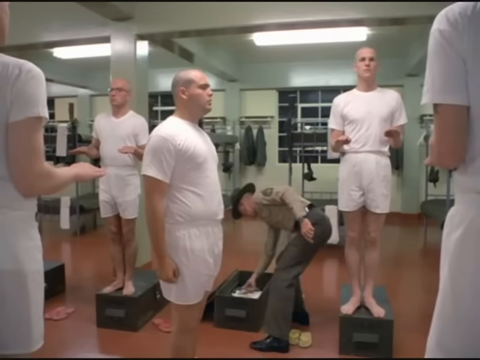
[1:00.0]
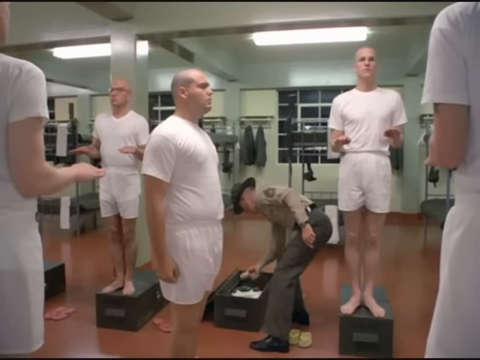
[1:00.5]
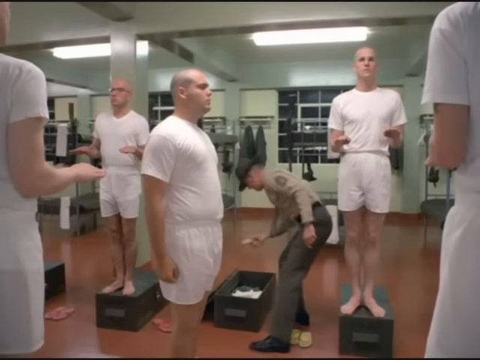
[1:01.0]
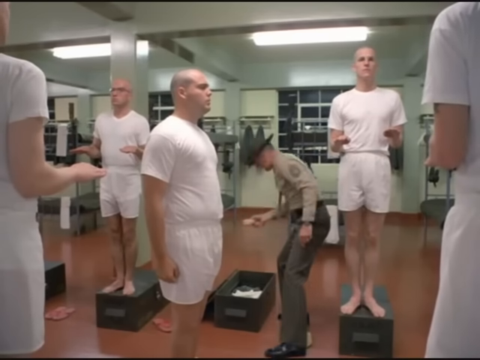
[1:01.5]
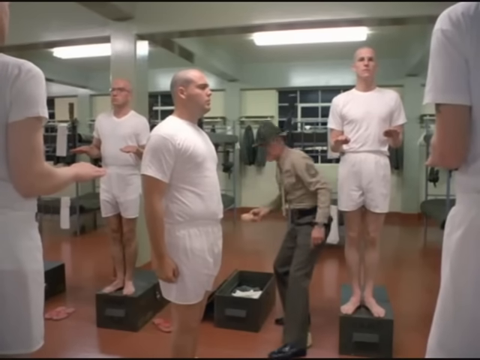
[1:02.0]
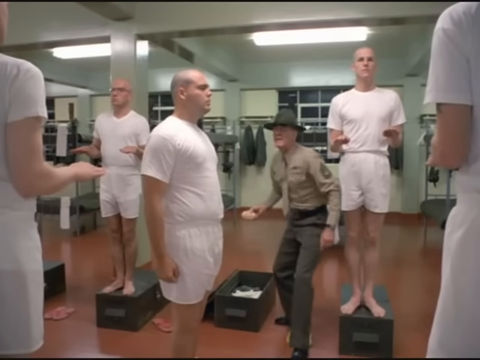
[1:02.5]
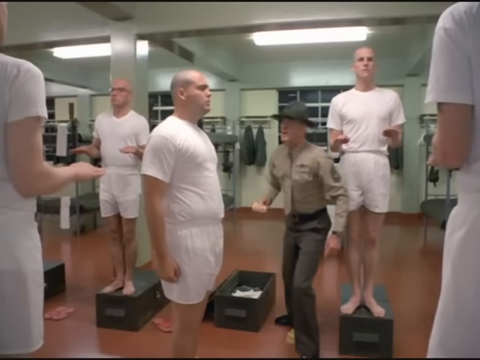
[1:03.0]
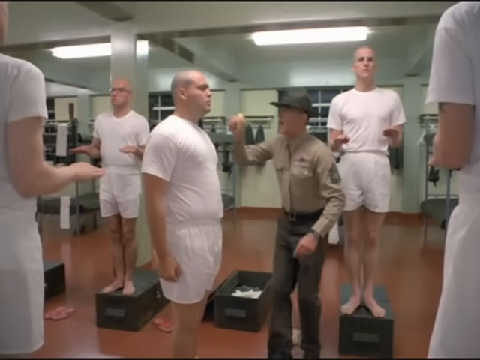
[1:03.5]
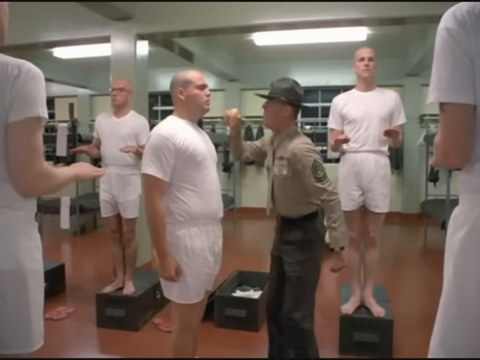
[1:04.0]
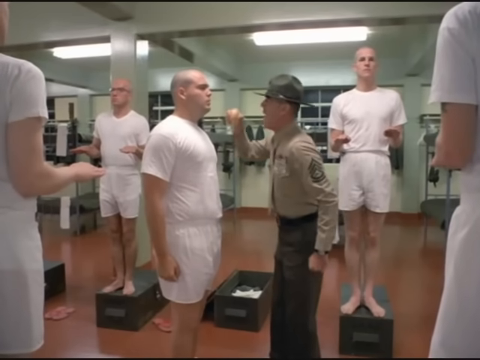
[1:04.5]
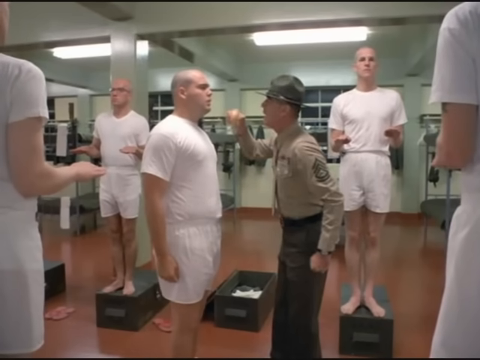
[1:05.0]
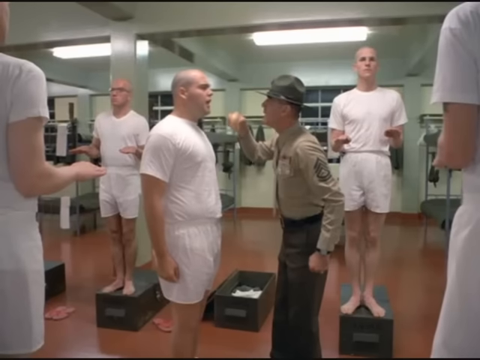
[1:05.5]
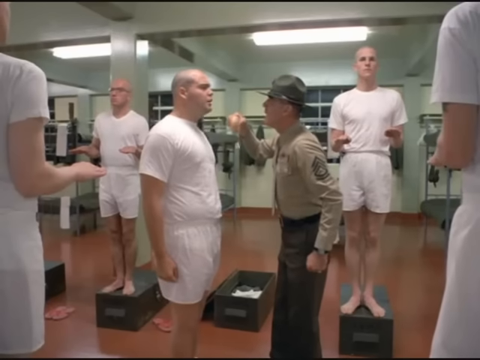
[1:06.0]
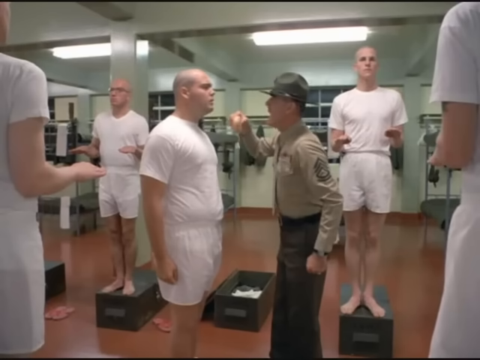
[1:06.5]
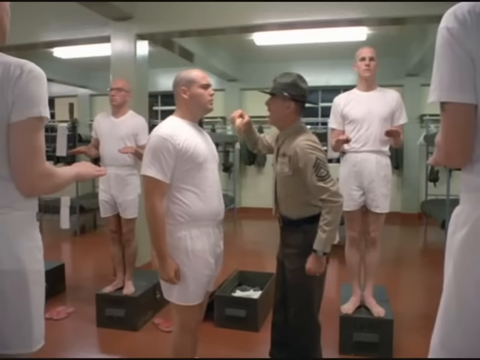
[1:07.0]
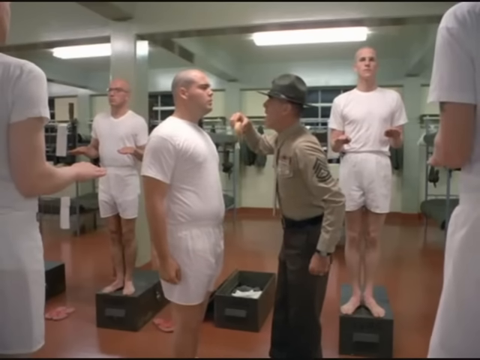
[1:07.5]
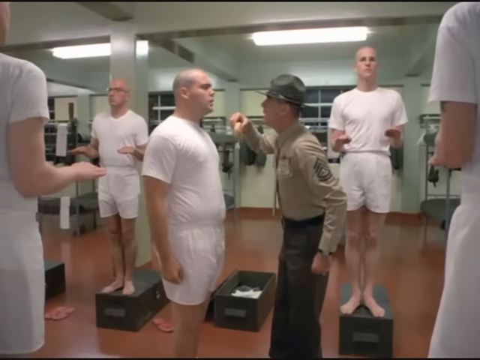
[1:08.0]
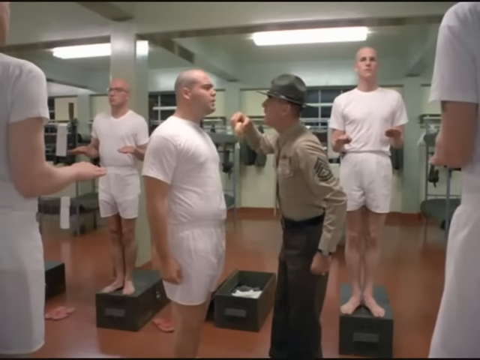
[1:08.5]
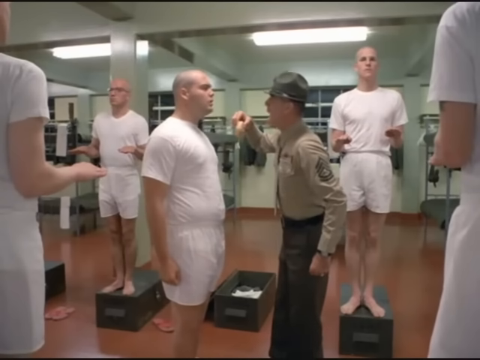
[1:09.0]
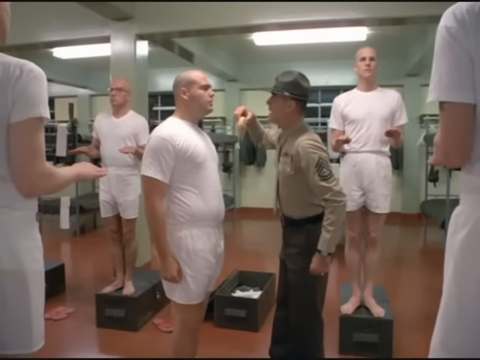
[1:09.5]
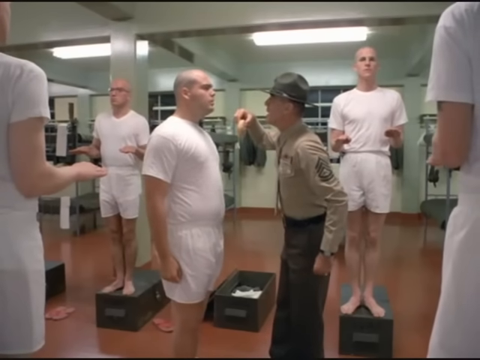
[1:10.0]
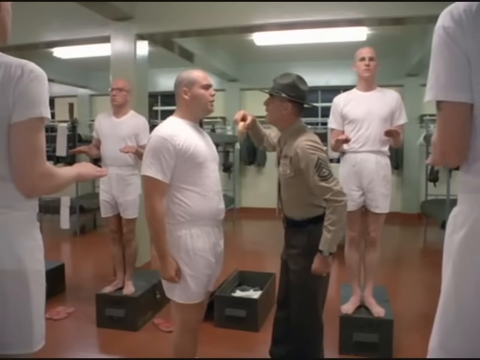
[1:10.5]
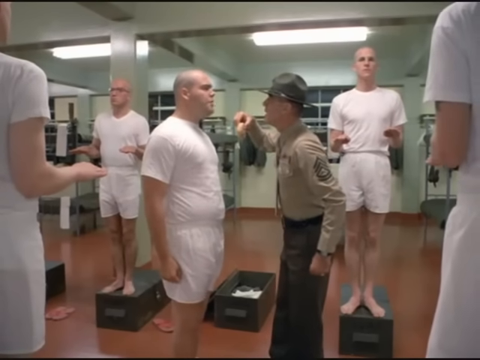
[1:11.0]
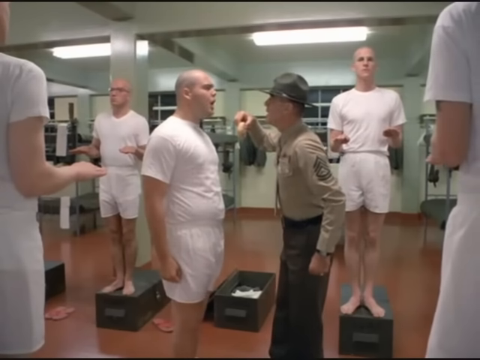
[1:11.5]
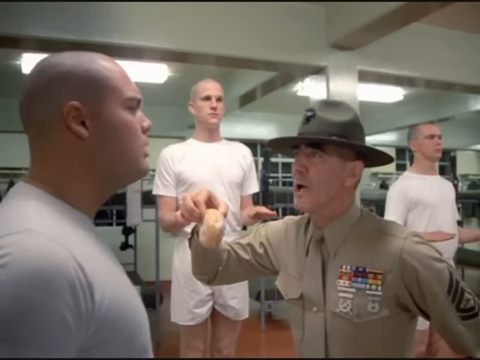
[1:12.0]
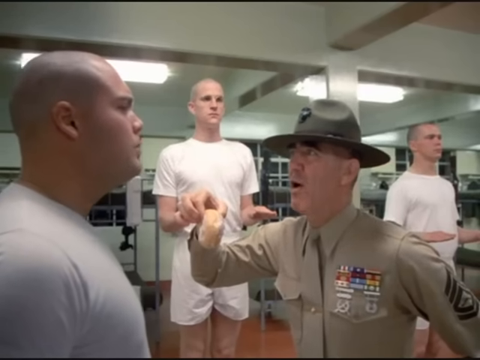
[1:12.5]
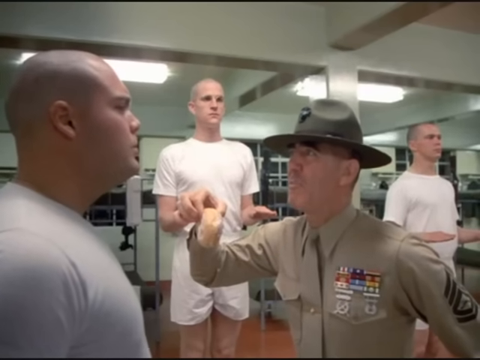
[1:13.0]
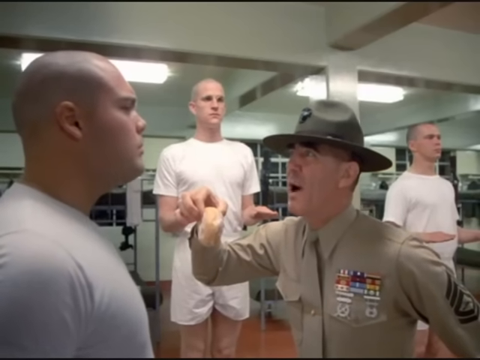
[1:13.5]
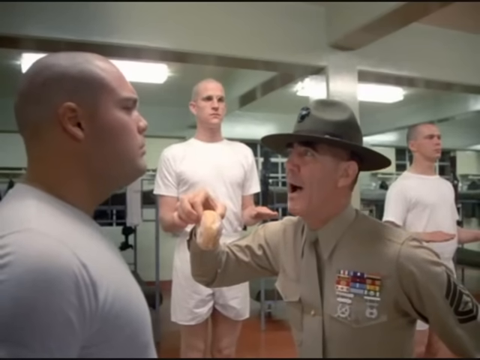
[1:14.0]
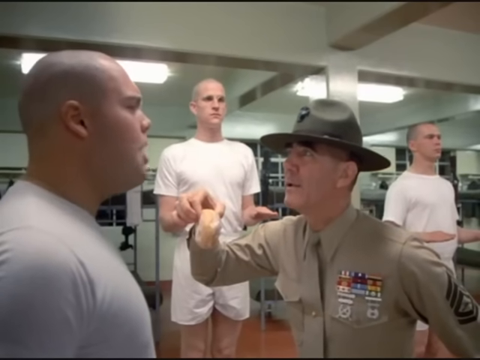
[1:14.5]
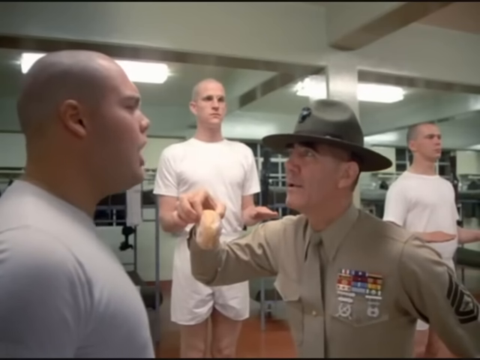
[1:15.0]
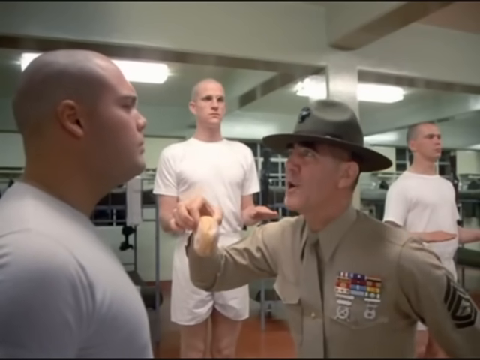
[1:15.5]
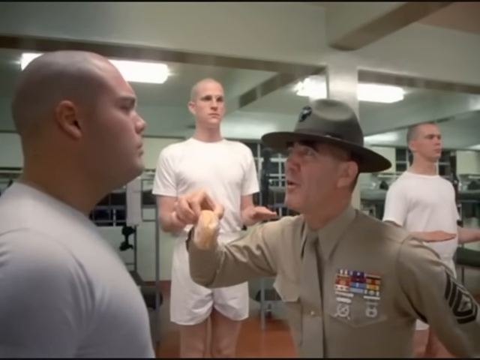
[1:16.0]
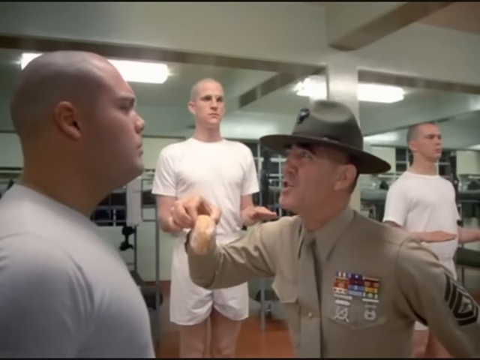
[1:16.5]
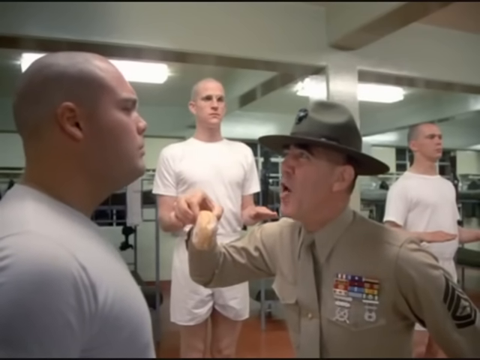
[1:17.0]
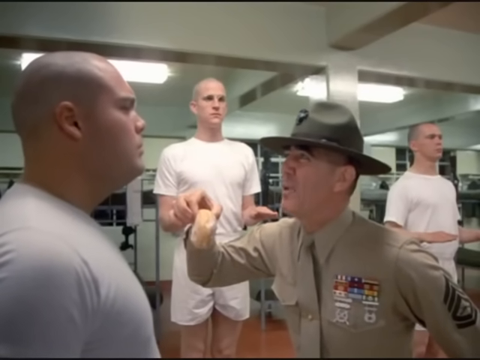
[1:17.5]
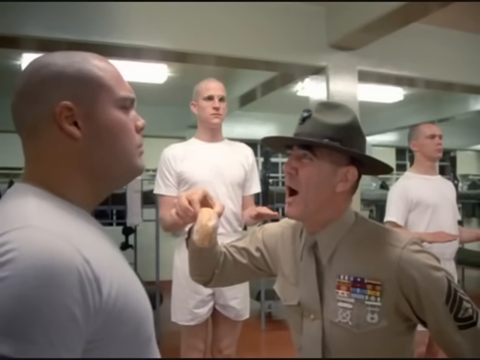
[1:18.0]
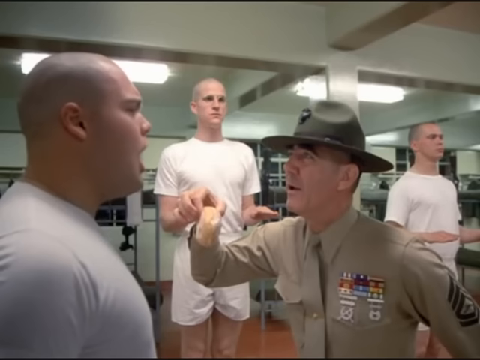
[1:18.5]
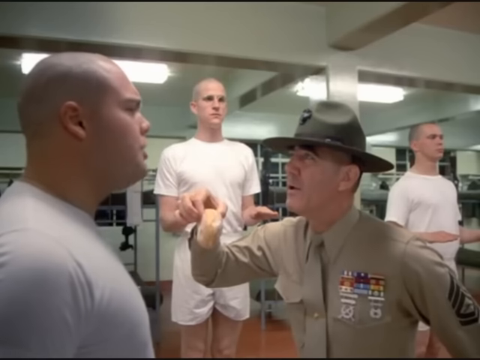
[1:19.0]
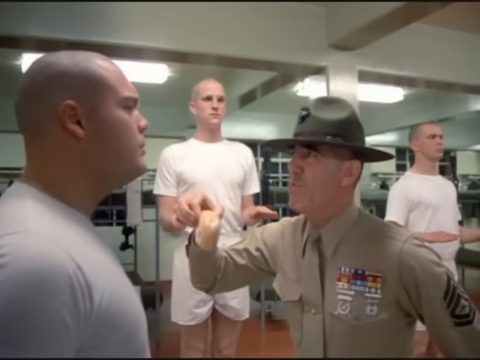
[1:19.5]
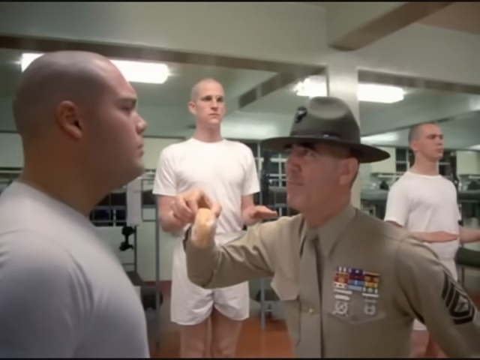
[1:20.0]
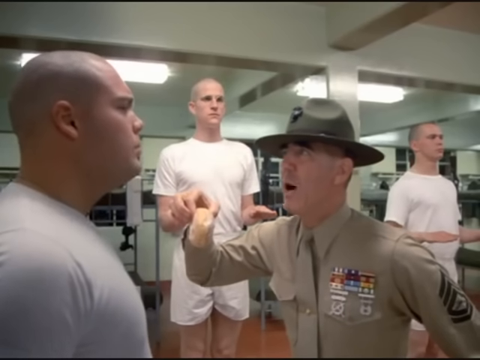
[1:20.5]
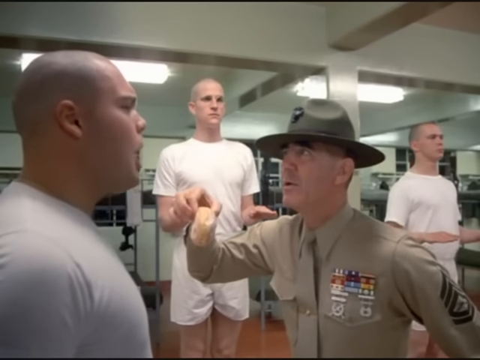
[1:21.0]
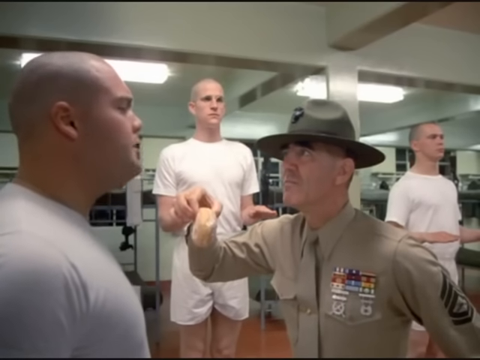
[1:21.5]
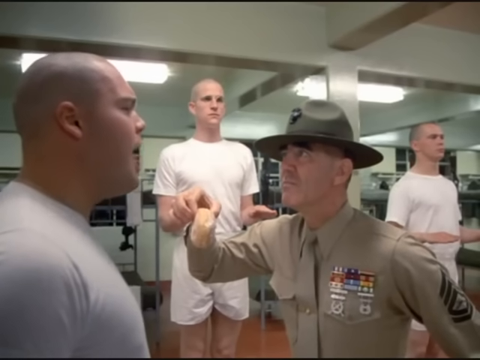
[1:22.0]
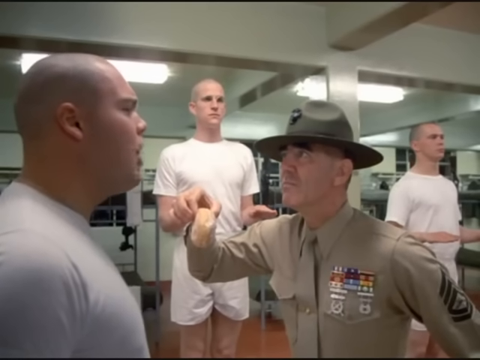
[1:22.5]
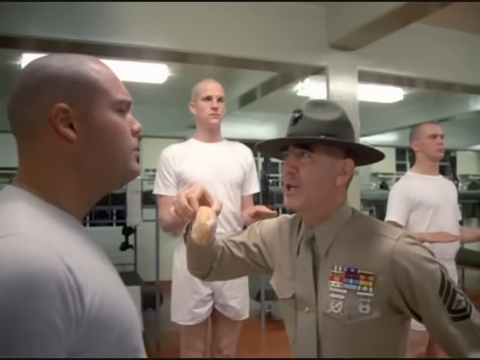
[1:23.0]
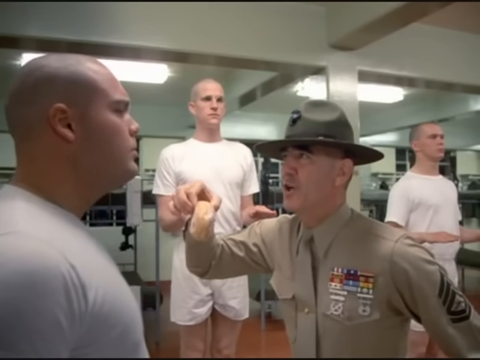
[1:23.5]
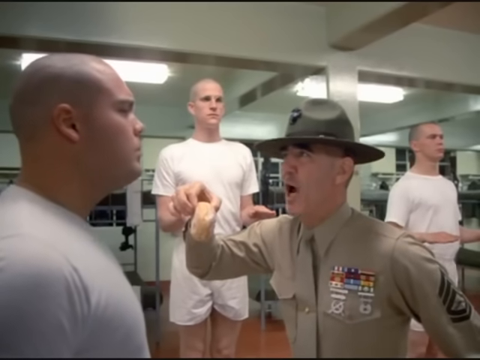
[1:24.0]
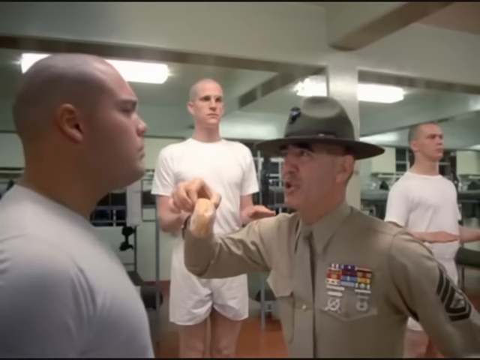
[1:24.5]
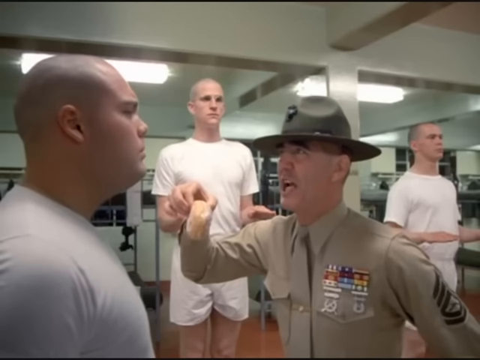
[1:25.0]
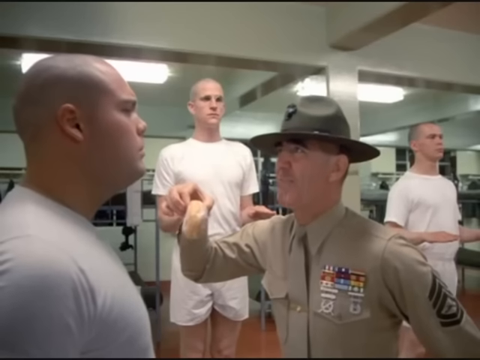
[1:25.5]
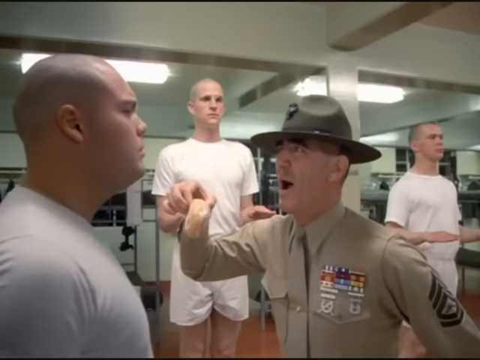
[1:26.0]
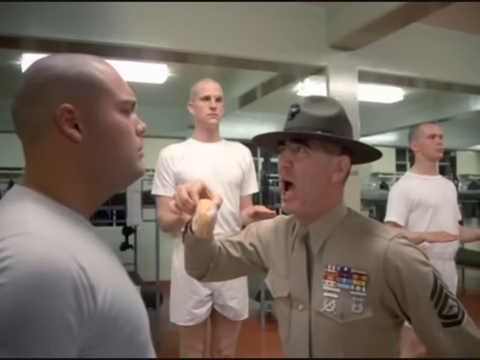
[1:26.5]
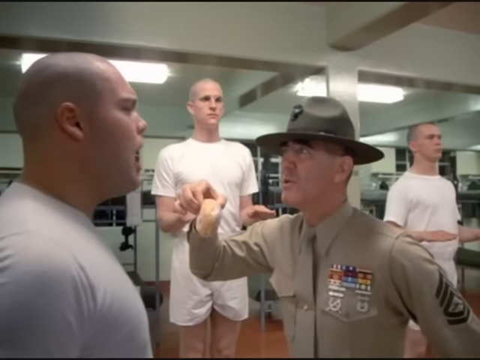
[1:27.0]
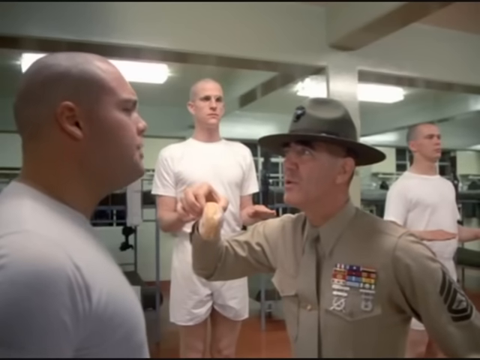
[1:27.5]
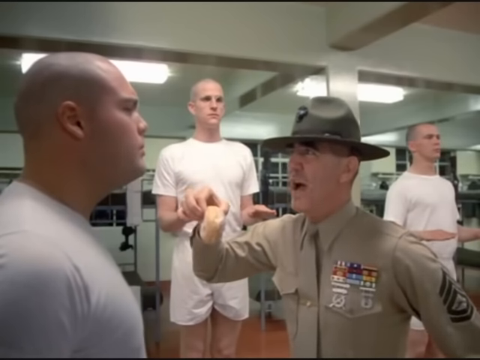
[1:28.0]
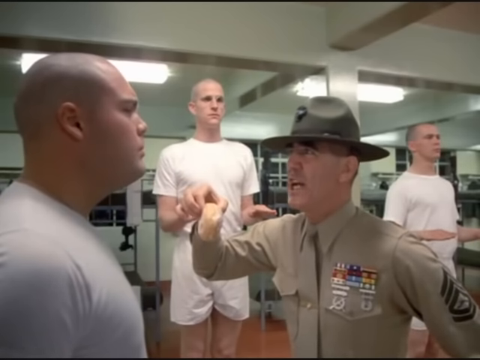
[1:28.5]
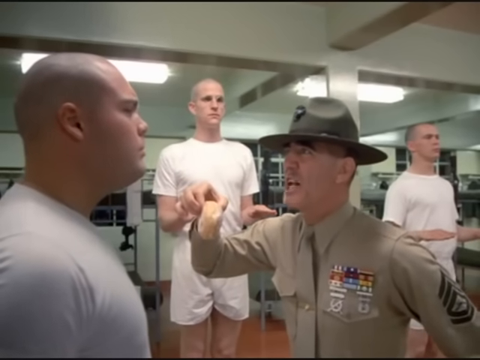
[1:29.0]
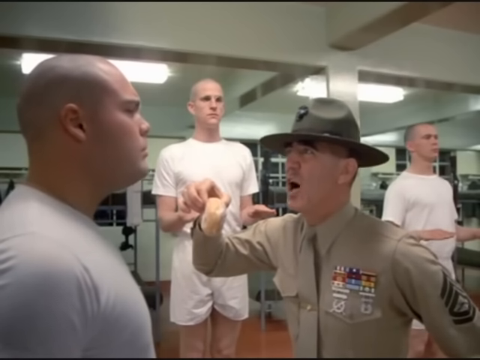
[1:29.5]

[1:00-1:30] Multiple trainees stand on top of foot lockers with their arms bent at the elbow and their hands stretched outward, palms facing the ground. One trainee stands on the floor at attention. A drill sergeant reaches into this trainee's foot locker, which is full of various white items, and picks up a single item that turns out to be a golden brown donut. The drill sergeant seems enraged and holds the donut to the trainee's face, shouting at him. The trainee responds, and the drill sergeant starts screaming at him. They go back and forth for some time while the drill sergeant holds the donut between his index finger and thumb in front of the trainee's face. Meanwhile, the other trainees remain standing in the same position.